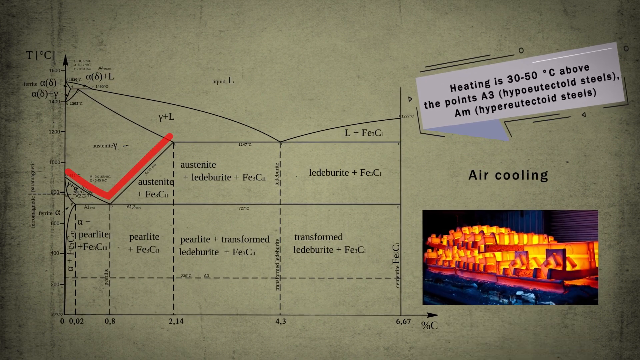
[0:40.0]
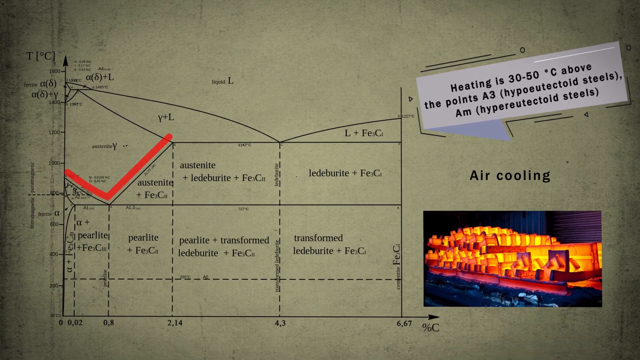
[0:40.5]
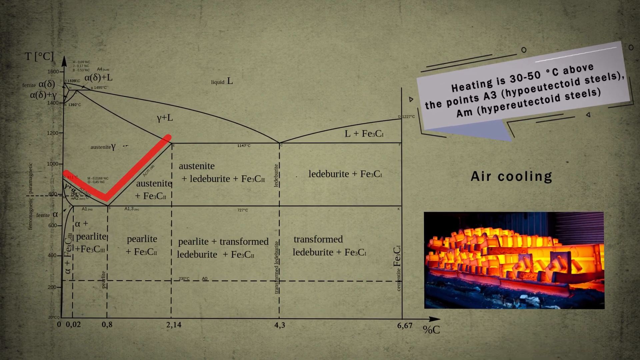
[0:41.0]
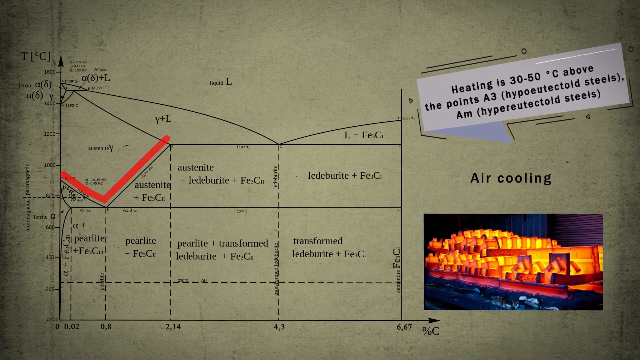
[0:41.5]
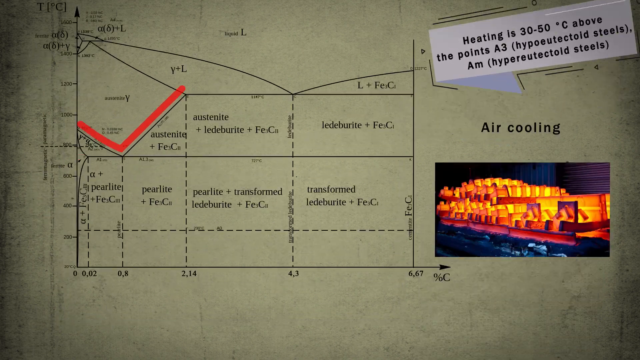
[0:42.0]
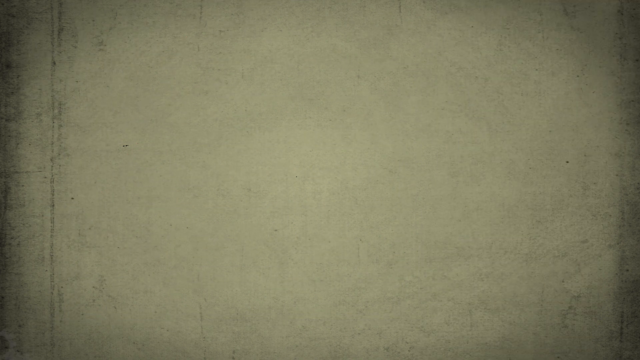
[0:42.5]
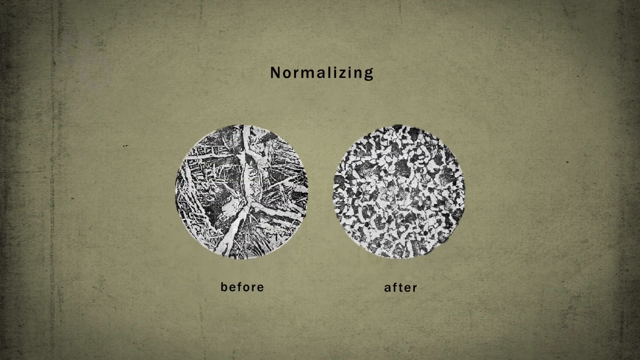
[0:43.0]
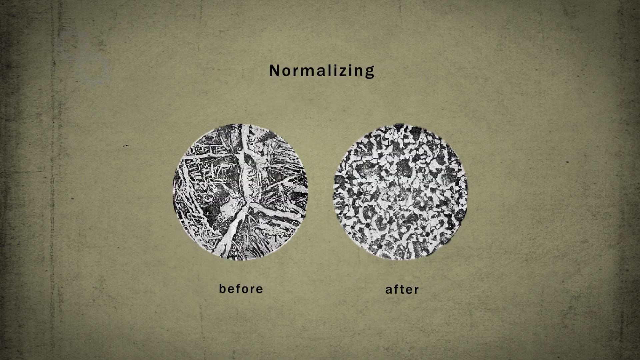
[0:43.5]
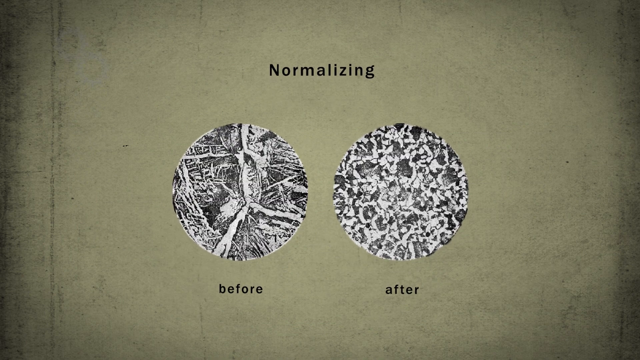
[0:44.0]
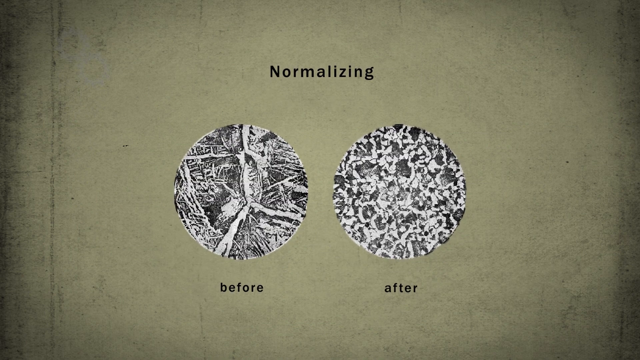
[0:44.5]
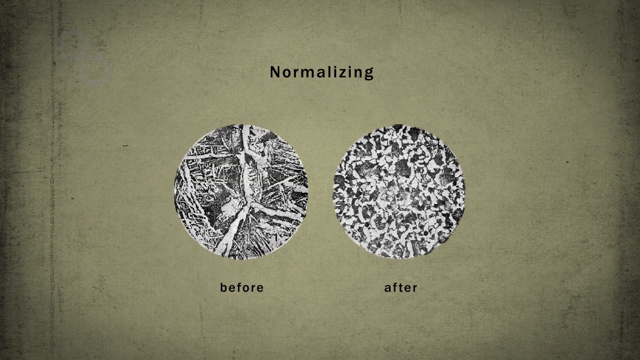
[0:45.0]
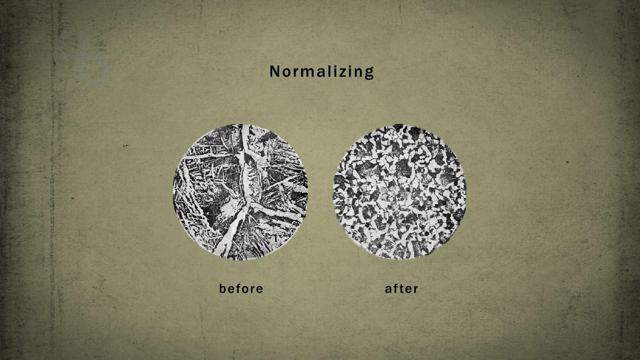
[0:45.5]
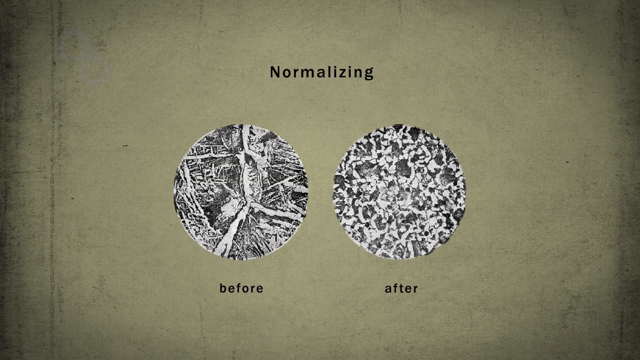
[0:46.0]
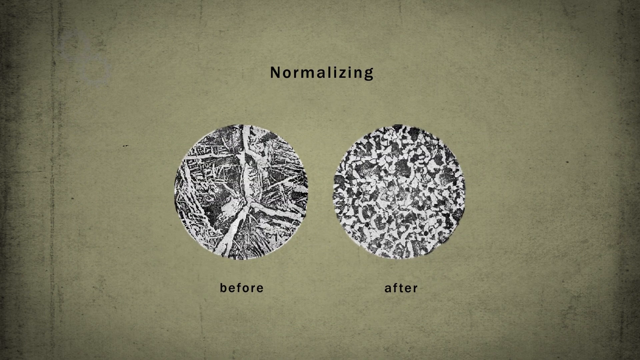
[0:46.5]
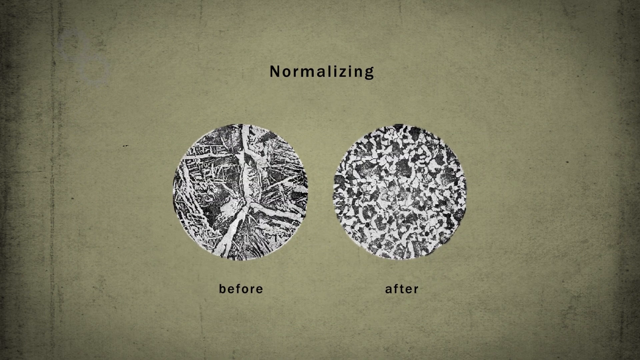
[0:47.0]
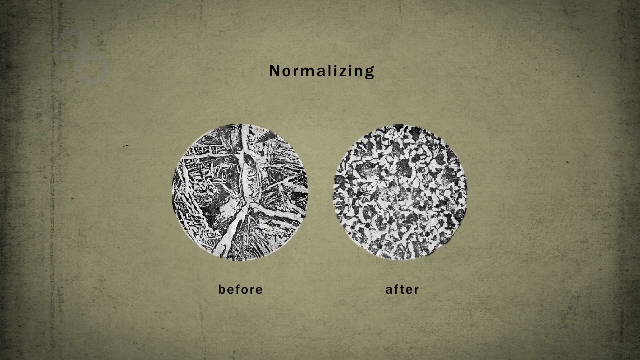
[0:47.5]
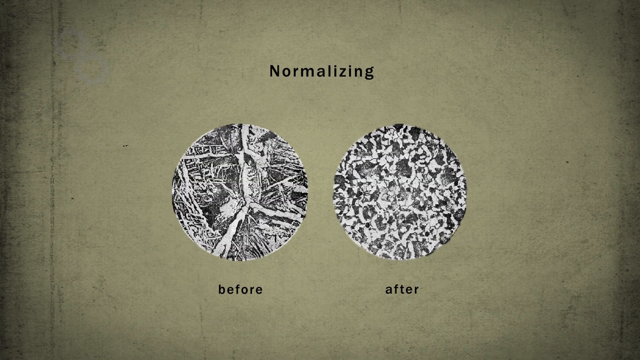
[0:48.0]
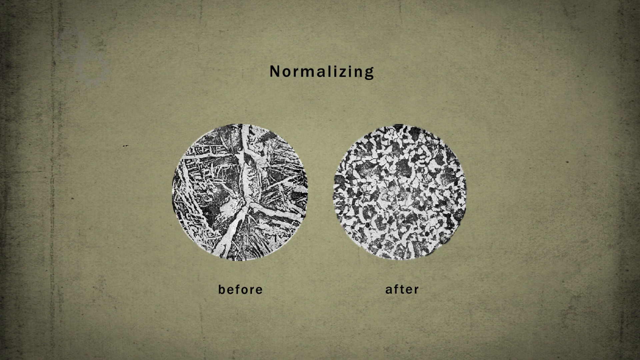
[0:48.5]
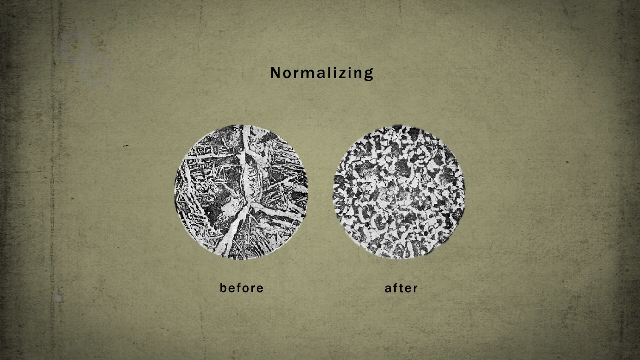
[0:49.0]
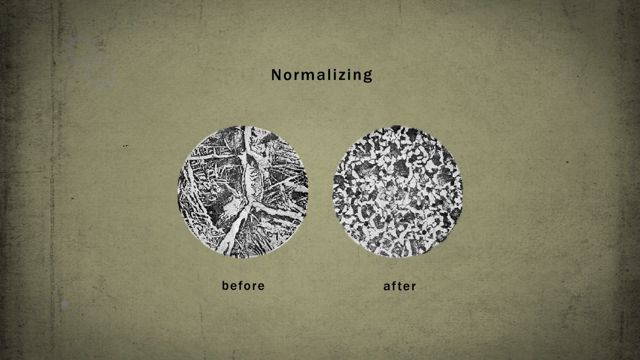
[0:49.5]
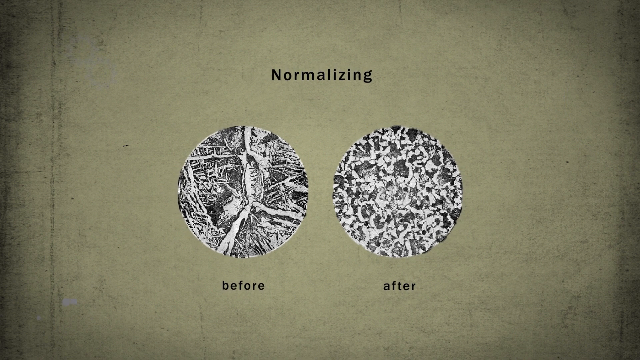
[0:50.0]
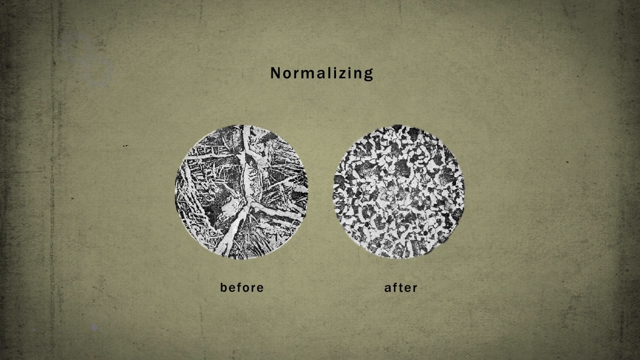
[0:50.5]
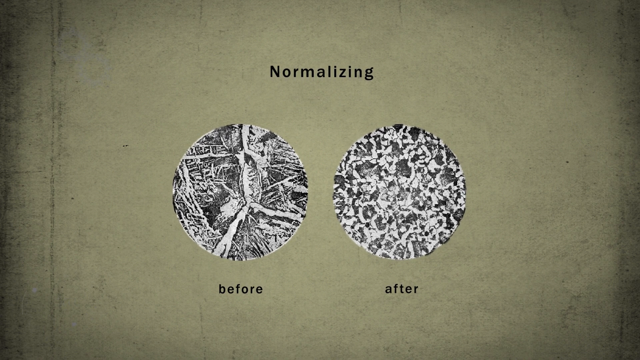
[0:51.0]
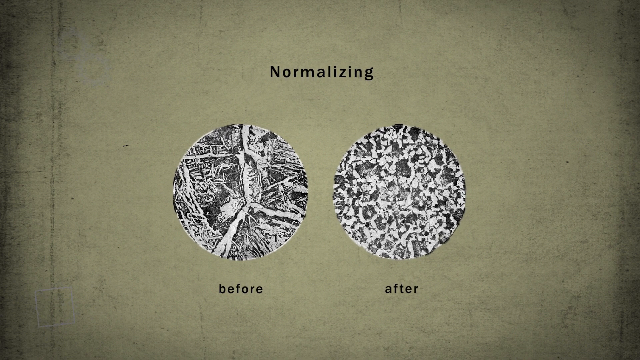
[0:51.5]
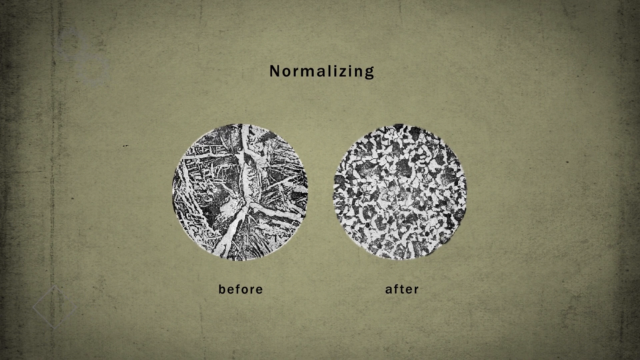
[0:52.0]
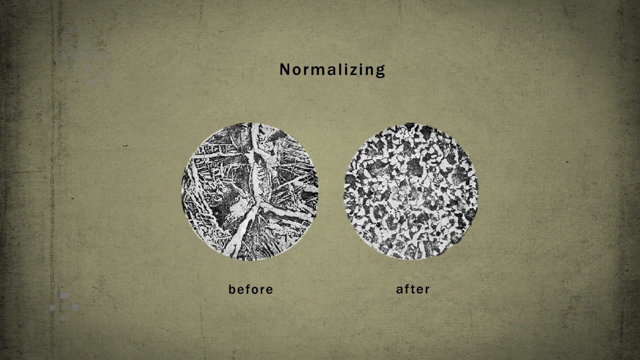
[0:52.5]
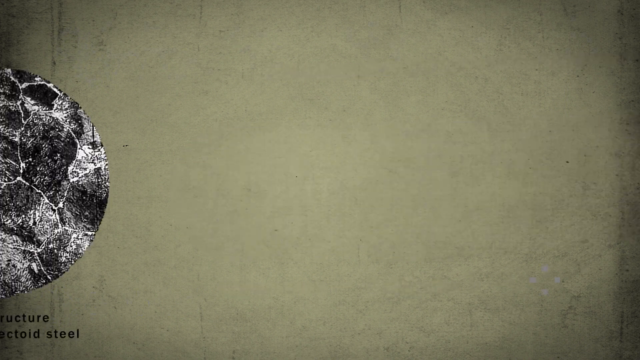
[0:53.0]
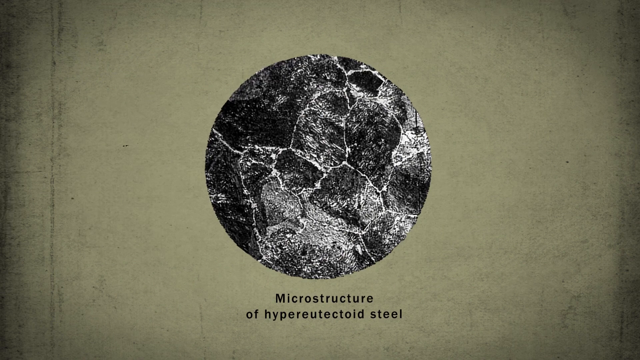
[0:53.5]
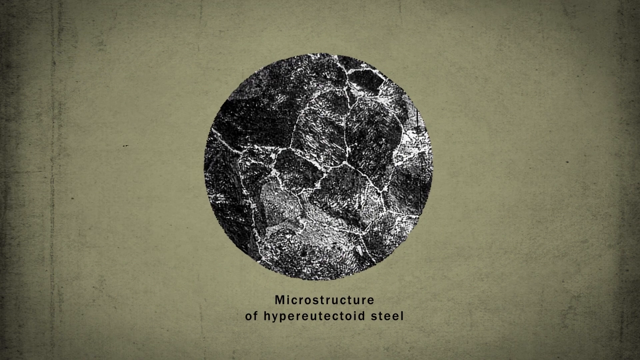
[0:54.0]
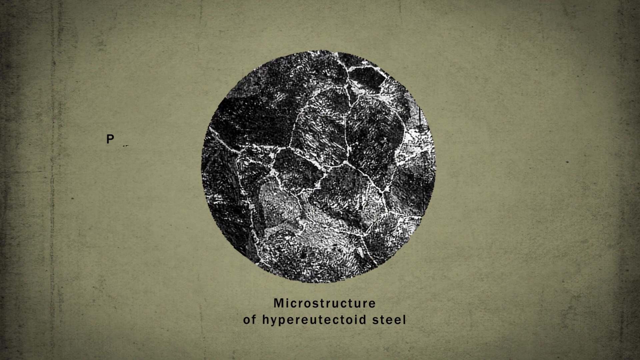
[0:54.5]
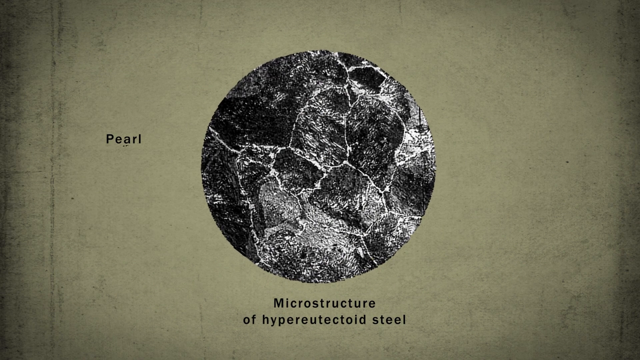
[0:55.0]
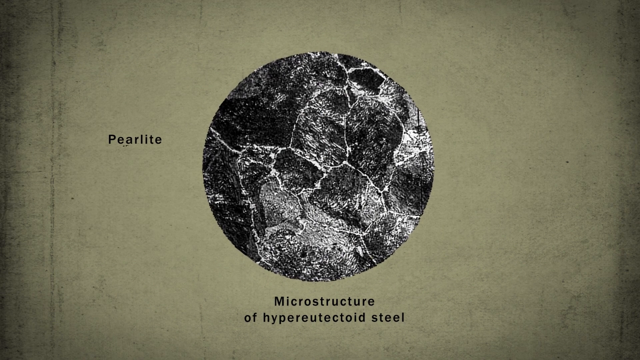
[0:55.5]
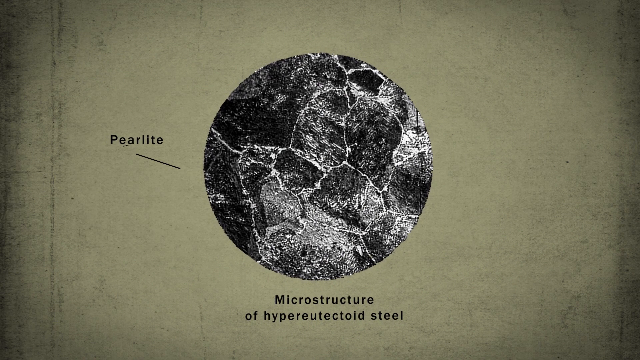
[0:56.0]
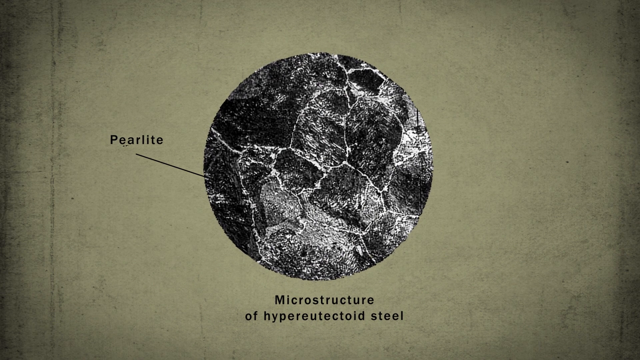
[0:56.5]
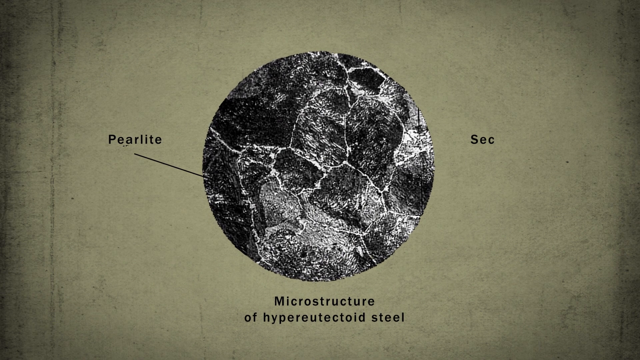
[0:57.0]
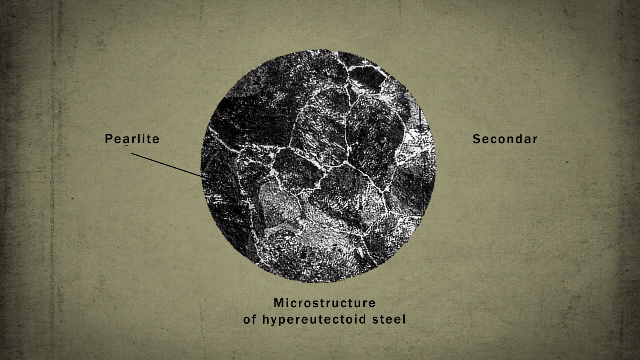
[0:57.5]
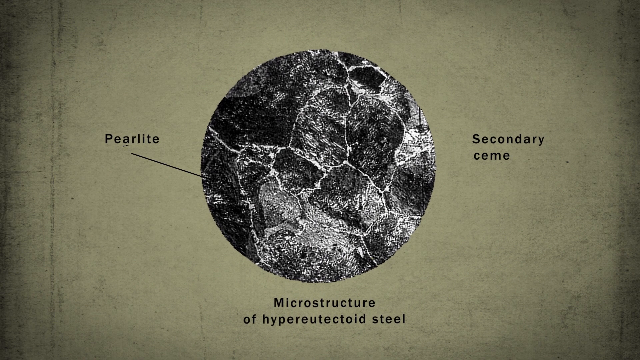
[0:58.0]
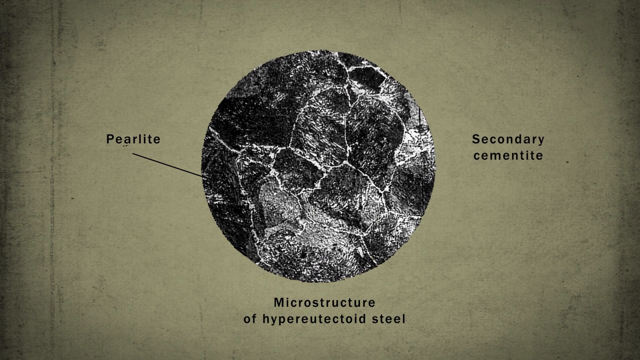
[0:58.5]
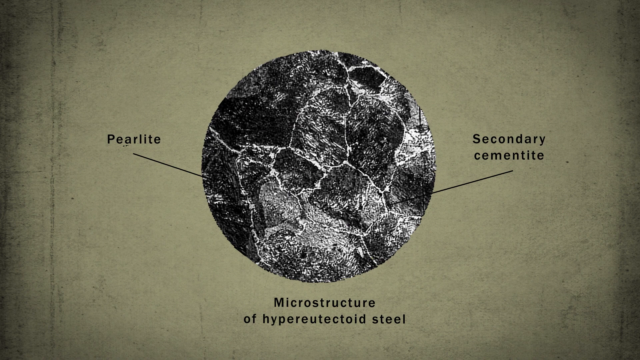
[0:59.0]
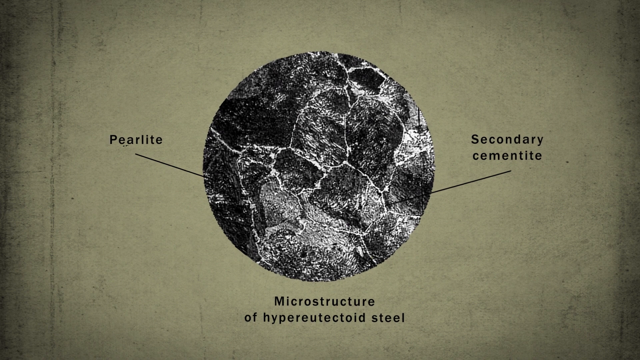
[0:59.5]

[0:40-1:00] The video returns to the grayish background with "normalizing" in black. Underneath, two black-and-white circles appear with images inside that cannot be made out. They then seem to move up, and the label "before" appears under the left one and "after" under the right one. The images seem to pulsate, growing bigger and smaller repeatedly. Next, that image appears to move to the right, and another black-and-white image pops up with the caption "microstructure of hypereutectoid steel" underneath. On the left, an arrow points to an area labeled "pearlight", and on the right, another arrow is labeled "secondary cementite".